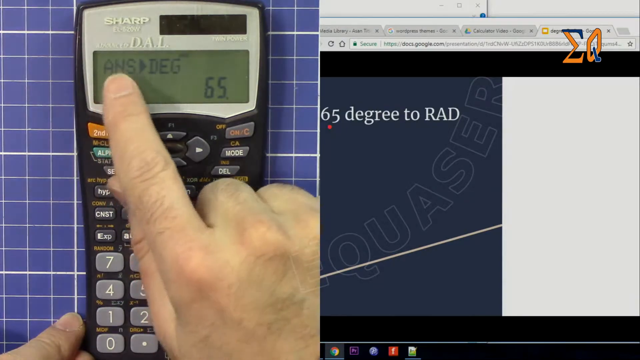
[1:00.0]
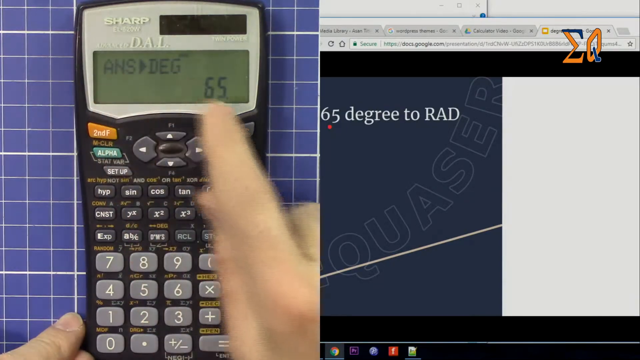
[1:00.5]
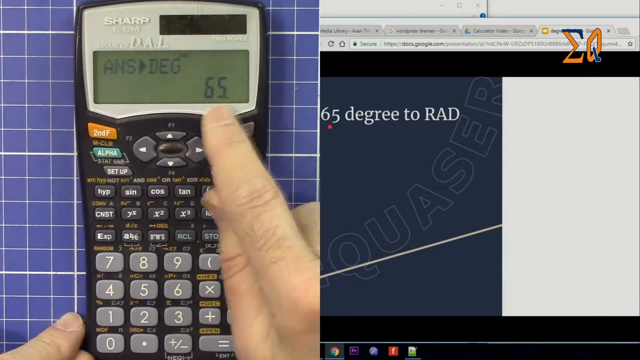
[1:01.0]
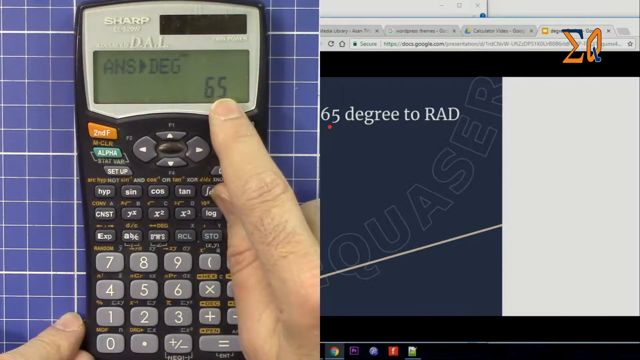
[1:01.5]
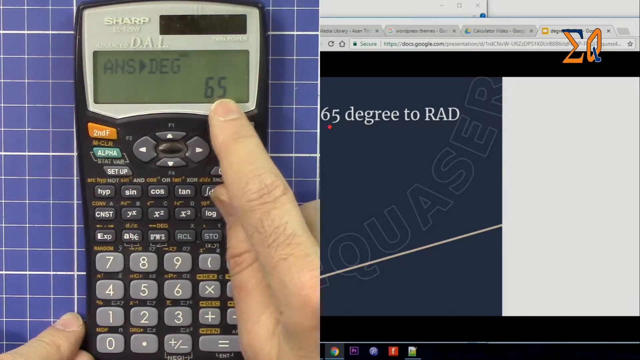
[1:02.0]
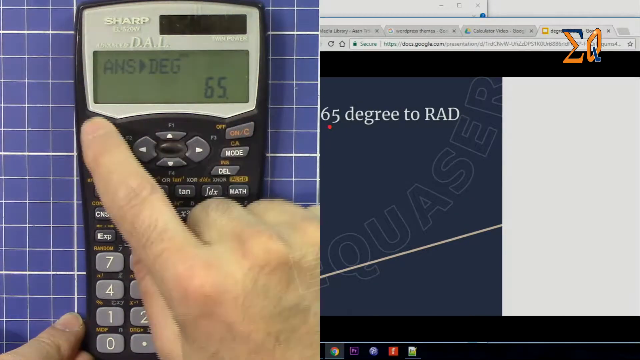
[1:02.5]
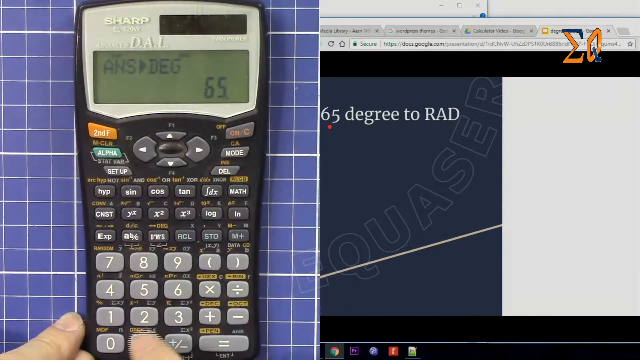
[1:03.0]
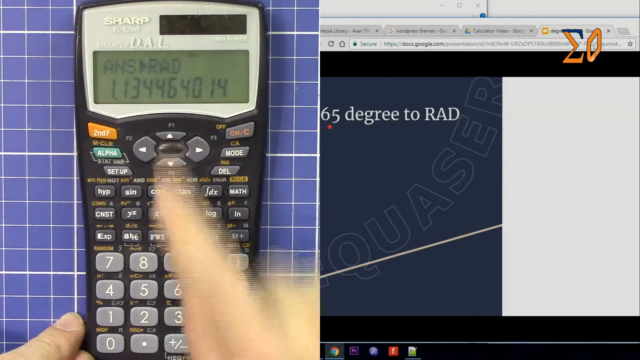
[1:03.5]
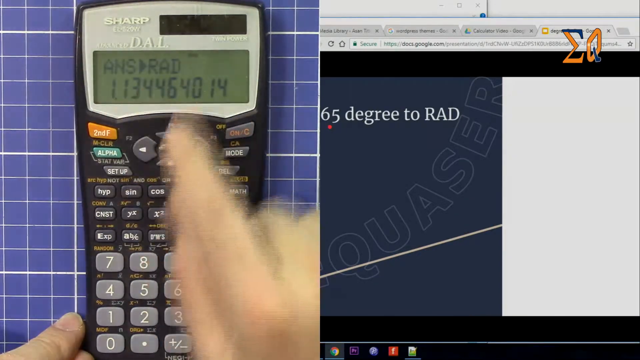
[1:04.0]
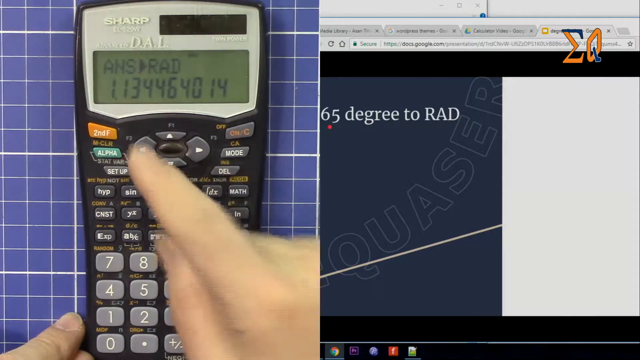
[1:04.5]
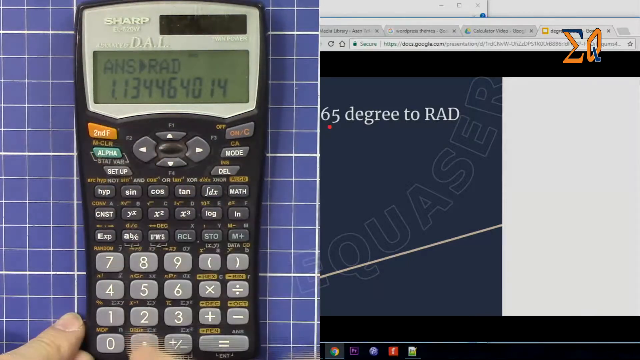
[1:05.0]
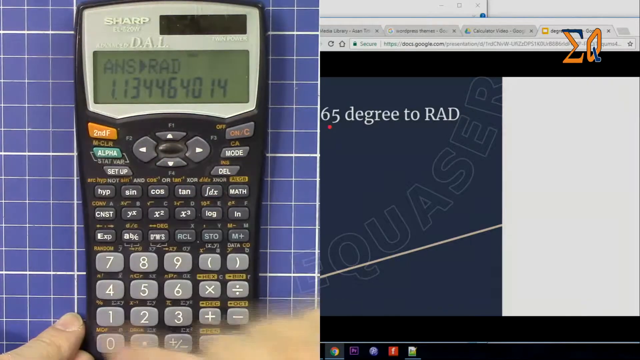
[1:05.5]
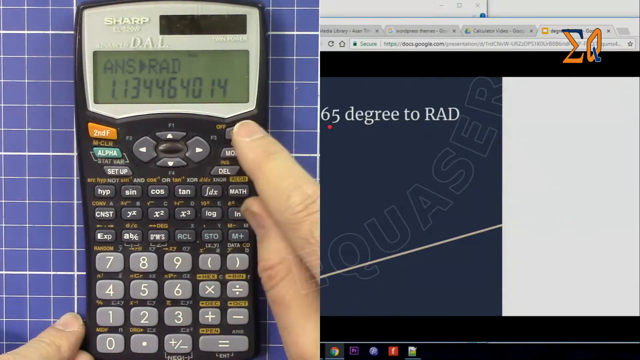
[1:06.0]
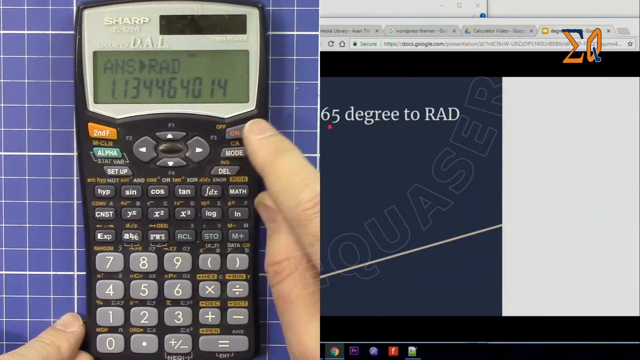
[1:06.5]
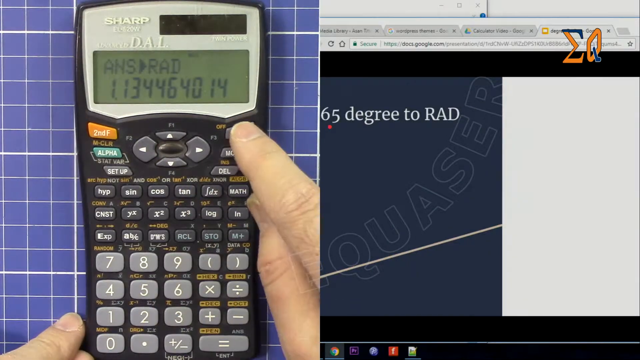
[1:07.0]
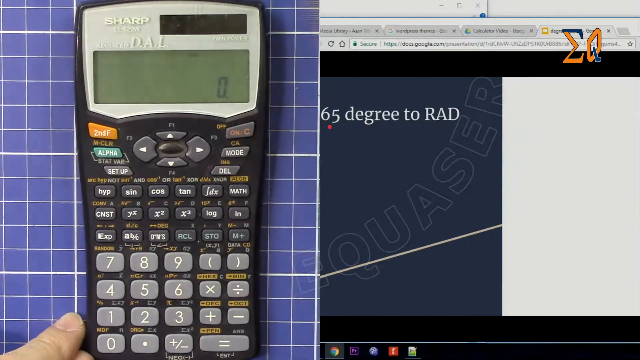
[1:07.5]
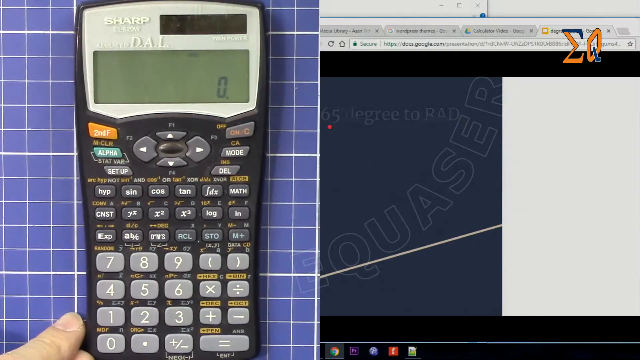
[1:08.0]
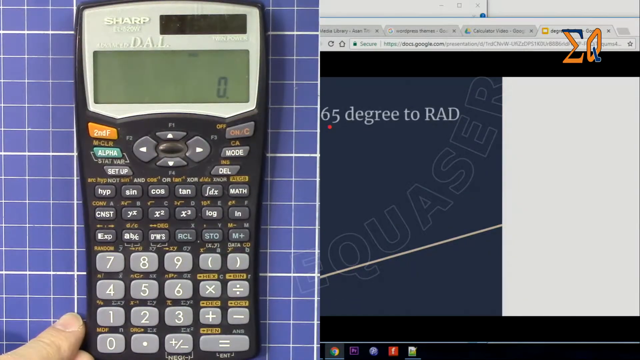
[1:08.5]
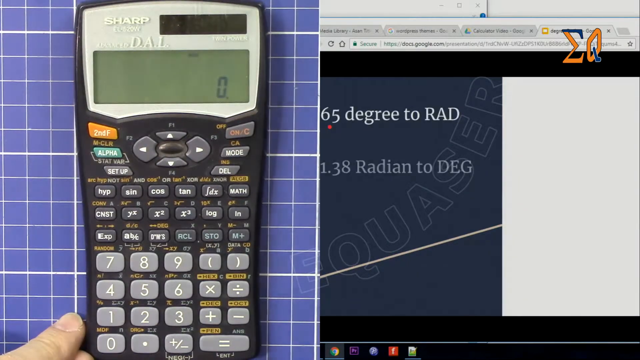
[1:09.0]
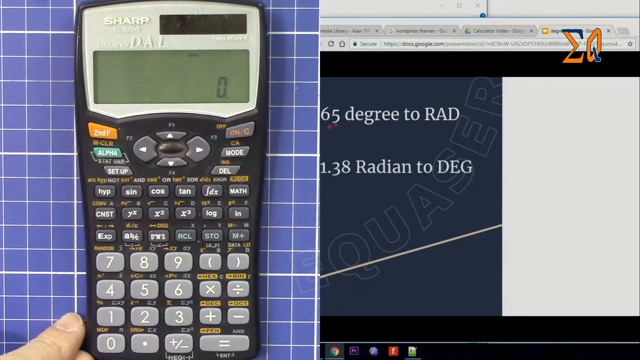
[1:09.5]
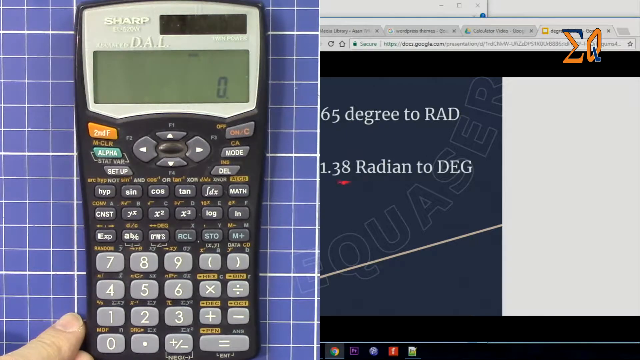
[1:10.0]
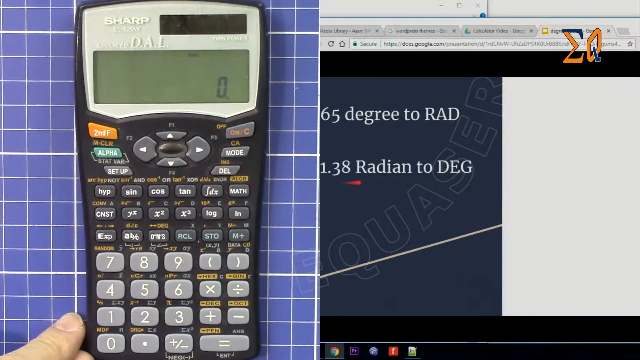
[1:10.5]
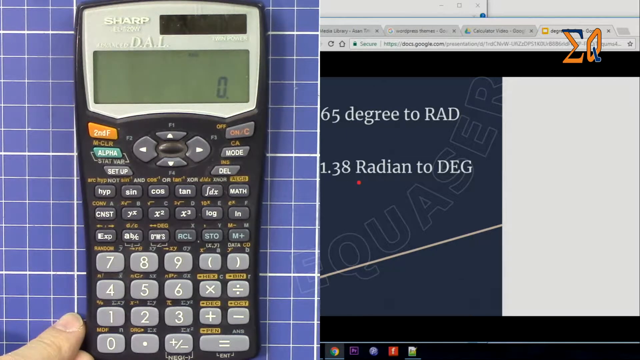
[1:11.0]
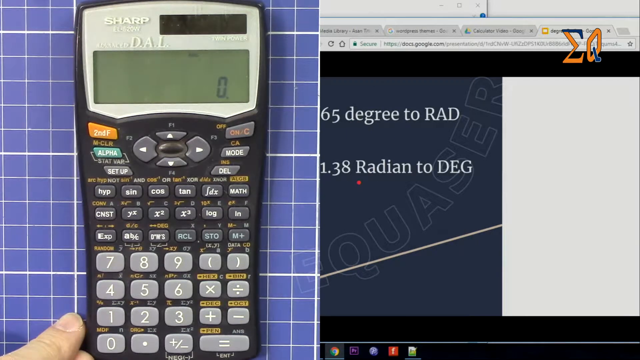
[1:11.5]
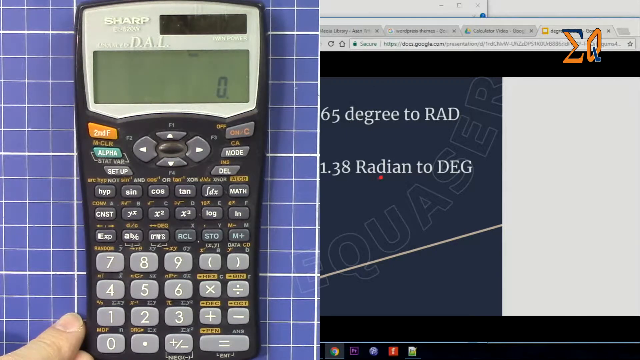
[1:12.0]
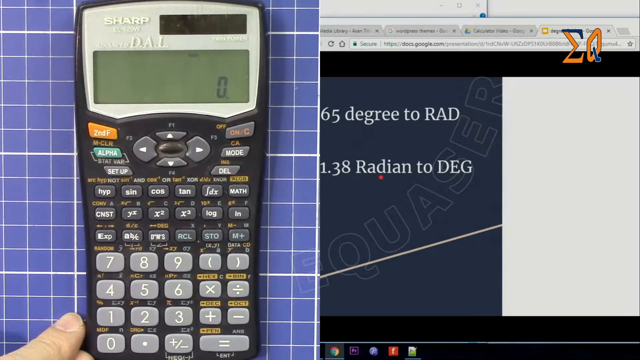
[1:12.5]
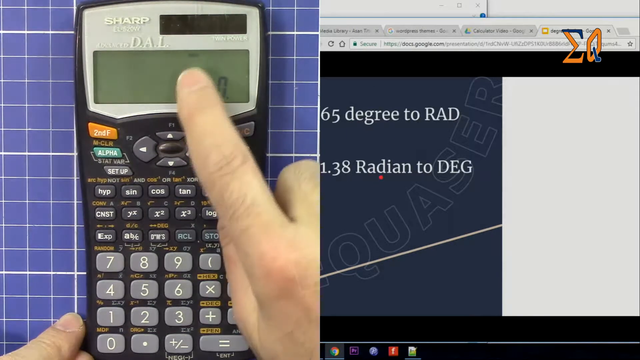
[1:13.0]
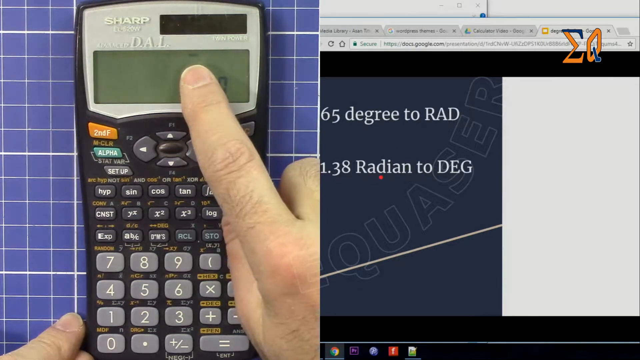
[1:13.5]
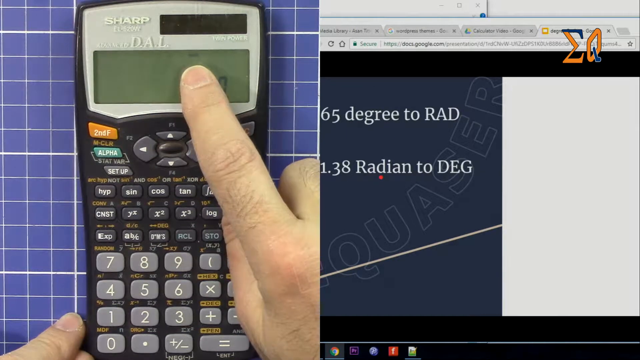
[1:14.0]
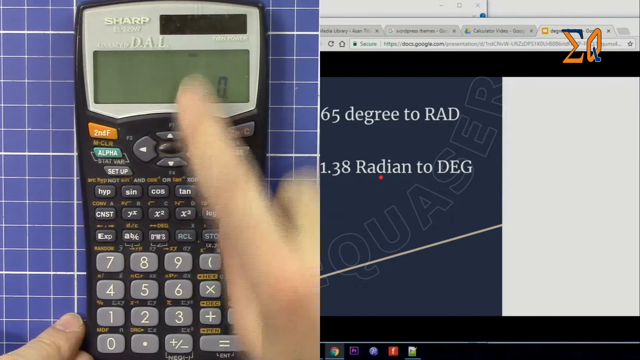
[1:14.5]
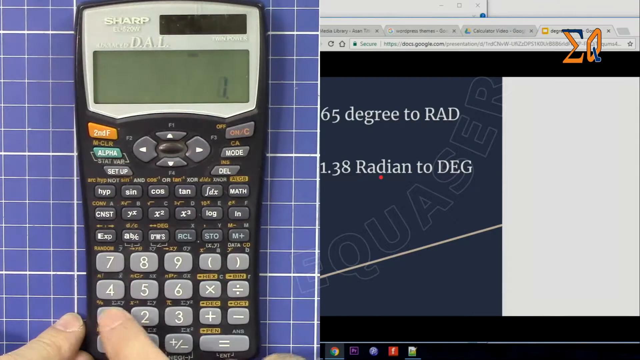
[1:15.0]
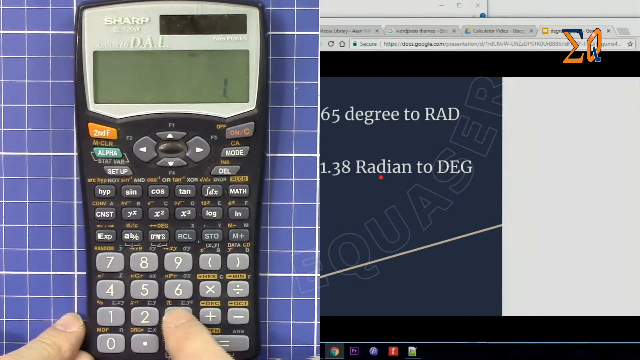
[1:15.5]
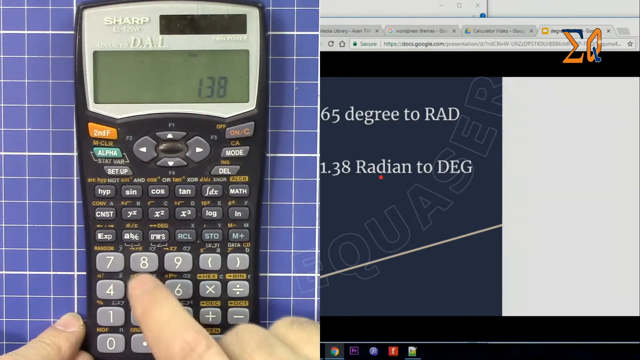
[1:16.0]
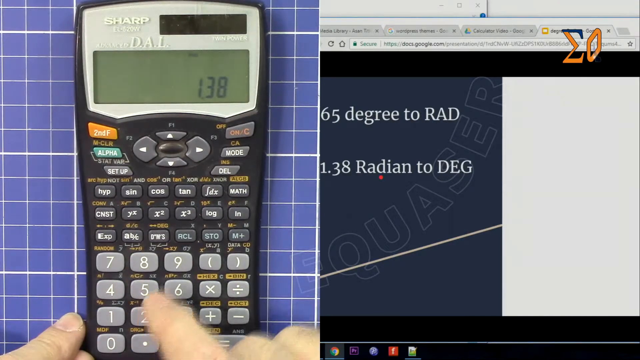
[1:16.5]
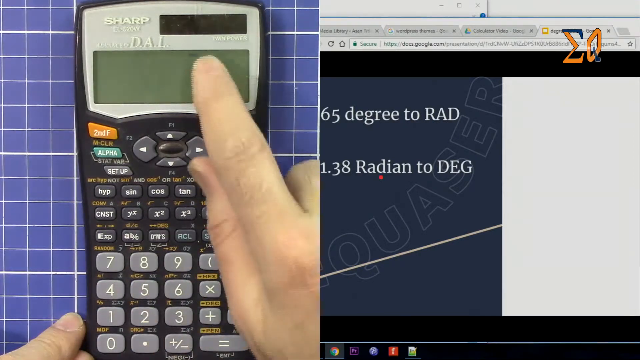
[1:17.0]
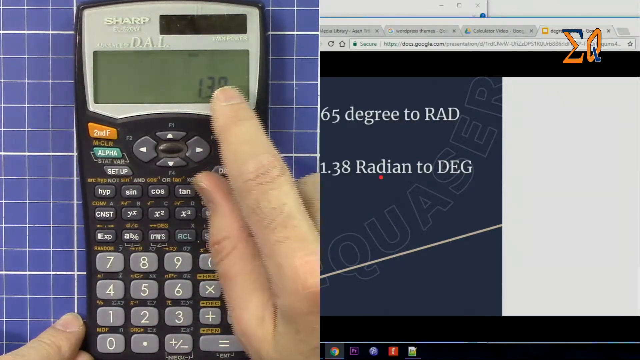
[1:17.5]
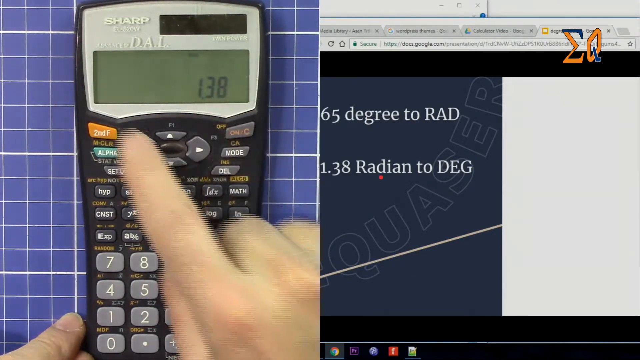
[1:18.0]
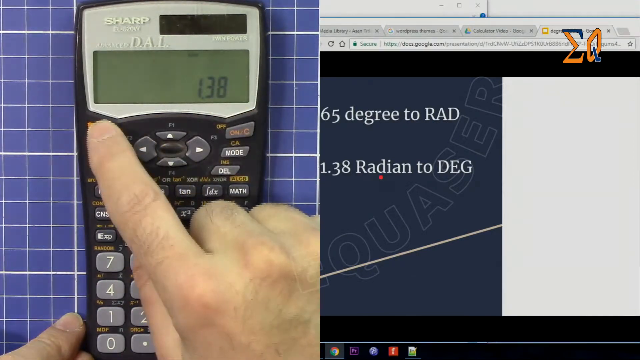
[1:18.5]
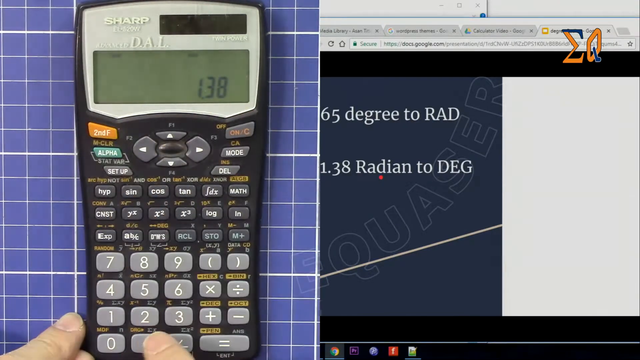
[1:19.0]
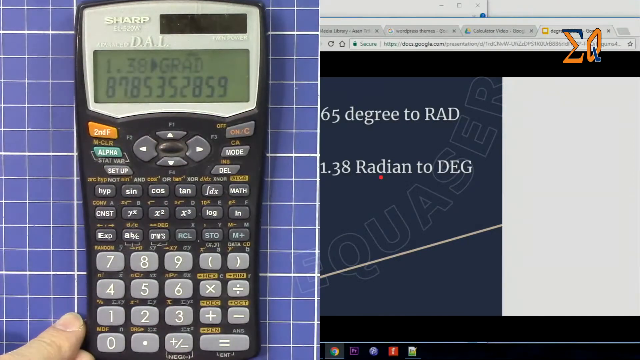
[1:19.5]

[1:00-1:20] The top of the screen shows "ANS" with an arrow pointing to "DEG", and the number to the right below is 65. The hand comes in, with a little of the side of the thumb visible from under the pointer finger, which points up to the top left corner of the screen. A little of the back of the hand is visible, with three knuckles and the middle and ring fingers bent underneath. The finger points at the top text, then at the number, and hits the orange button again, changing the top to "ANS" with the arrow pointing to "rad", with the numbers "1134464014" underneath. The finger points at those and hits the orange button again, which does not work, then hits the on button on the right side, which clears everything back to zero. On the right side, in the dark blue just above the center, it says "1.38 radian to DEG", and the red dot is run underneath it. The finger points up to the small print at the top of the calculator. Coming in from the right side, the hand goes down, types in 138, points at it, and hits the orange button.